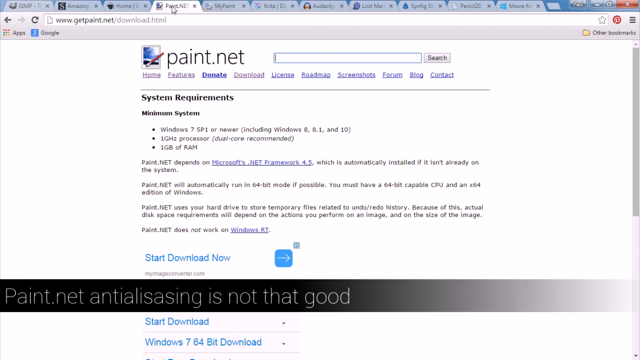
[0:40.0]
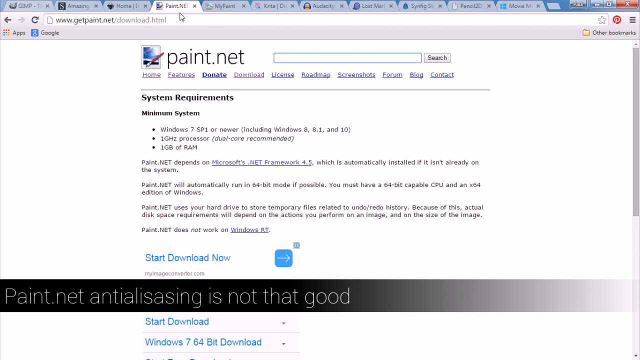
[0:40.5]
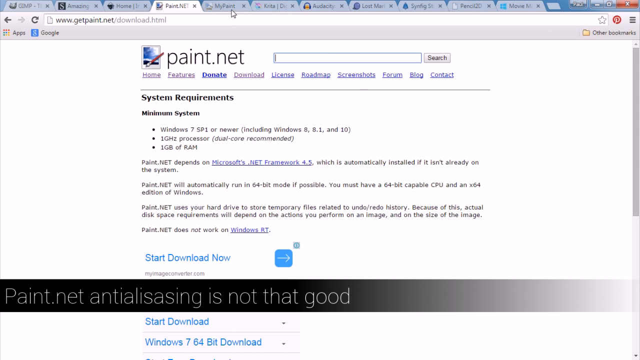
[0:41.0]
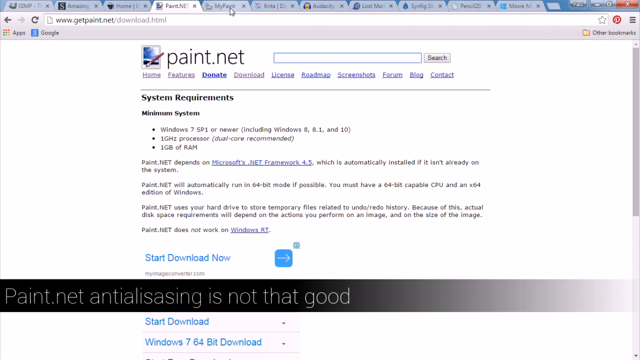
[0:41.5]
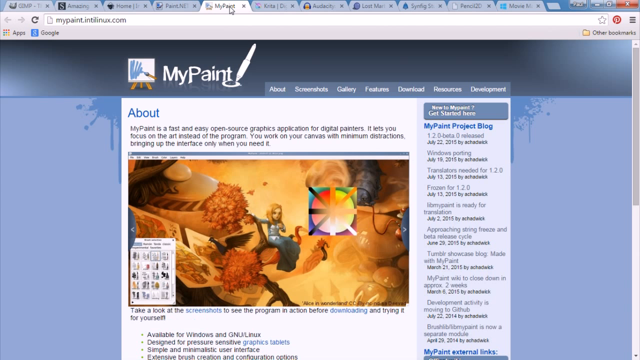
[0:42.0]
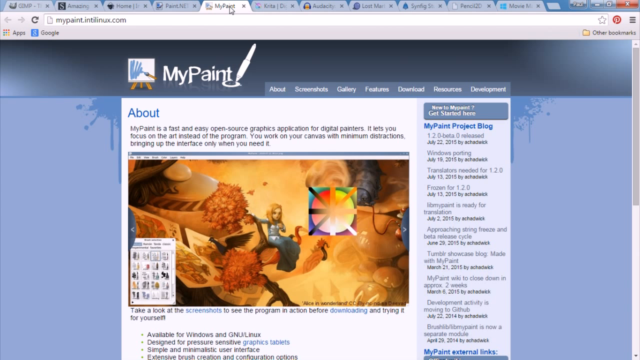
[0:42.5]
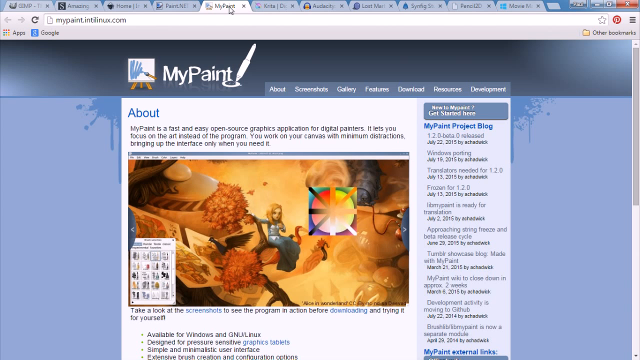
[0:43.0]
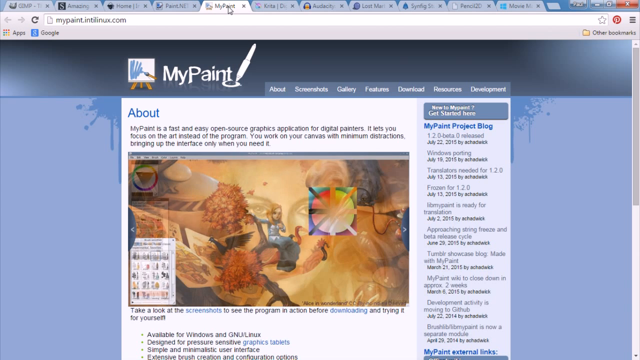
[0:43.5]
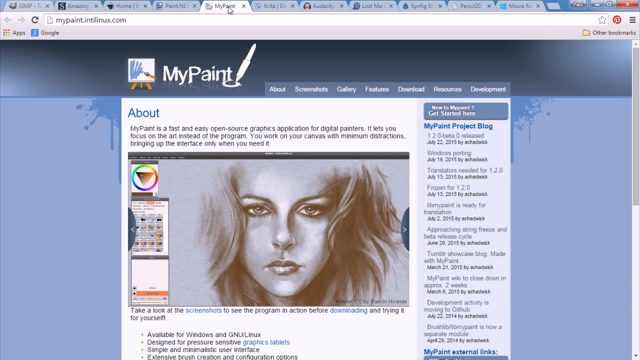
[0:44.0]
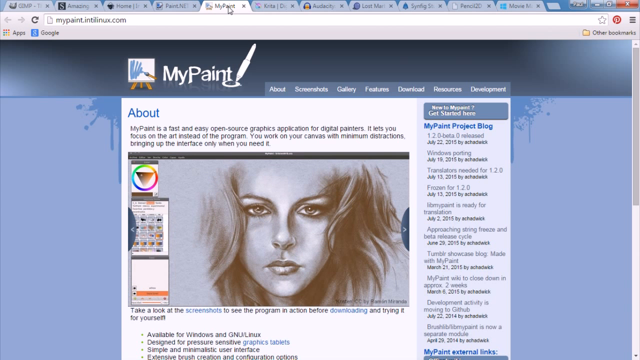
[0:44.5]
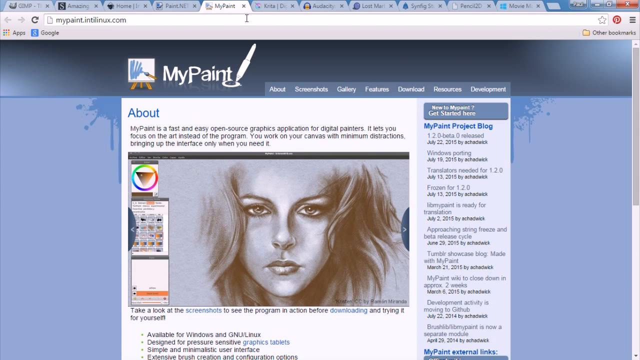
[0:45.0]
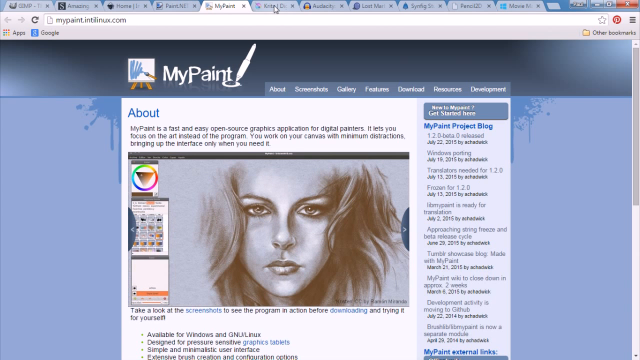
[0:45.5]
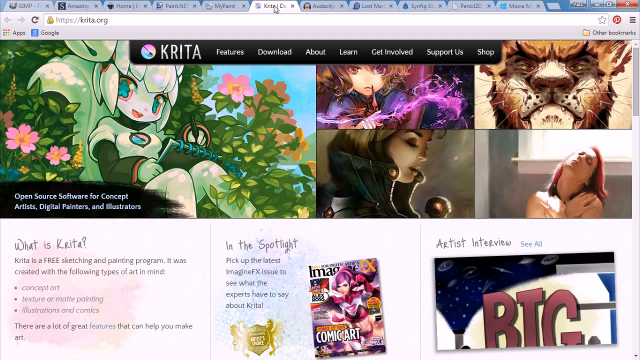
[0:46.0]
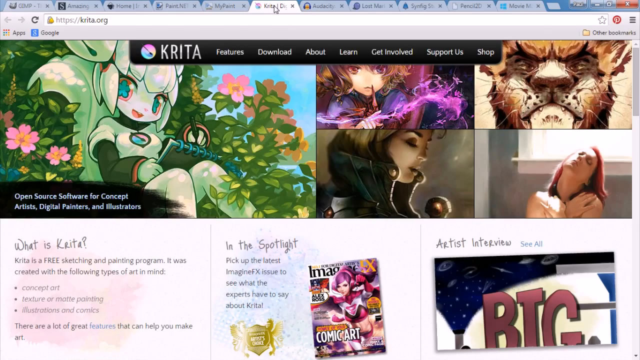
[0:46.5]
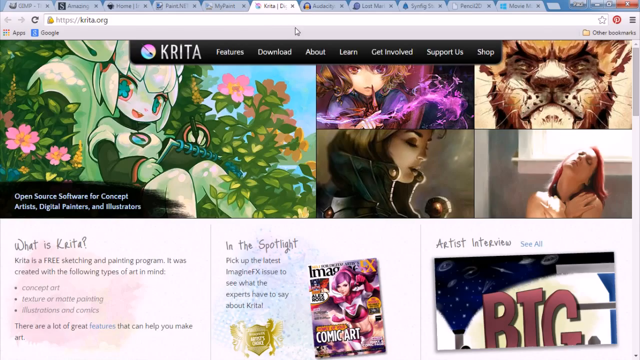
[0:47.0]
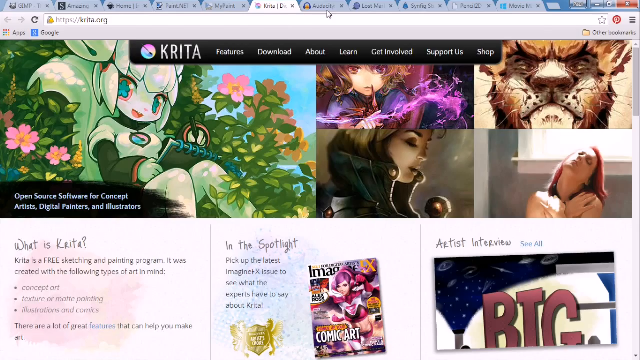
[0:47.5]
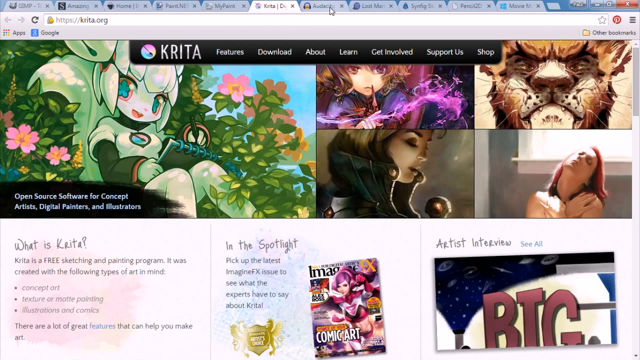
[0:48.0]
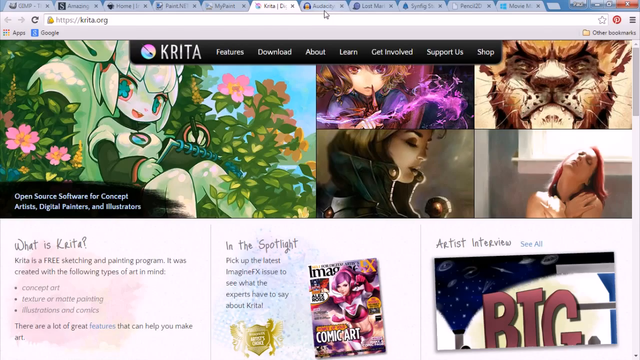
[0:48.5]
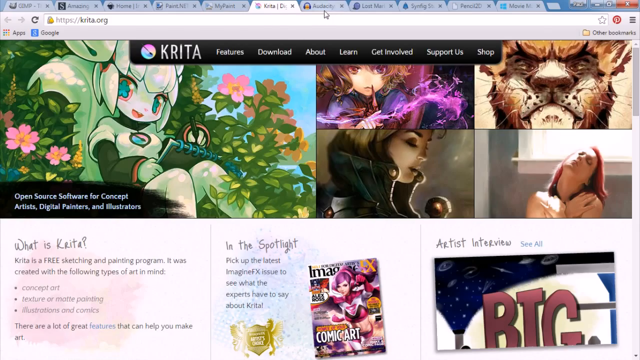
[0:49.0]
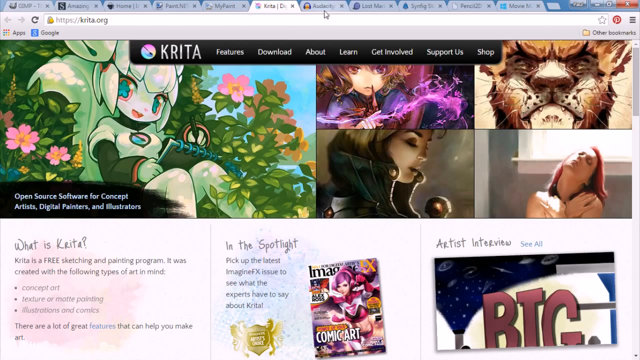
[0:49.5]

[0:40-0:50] The fourth tab, paint.net, is open and has a white background. Along the top are clickable menu items including "features" and "donate," apparently in blue, then "download," "license," "road map," "screenshots," "forum," "blog" and "contact," each underlined with a thin gray line. Black text reads "system requirements," "minimum system," "Windows 7 SP1 or newer, including Windows 8, 8.1, and 10," "1GHz processor, dual-core recommended" and "1G of RAM." Text at the bottom begins "paint.net." The person then clicks the next tab, labeled "My Paint," and then the one after it, labeled "Krita."